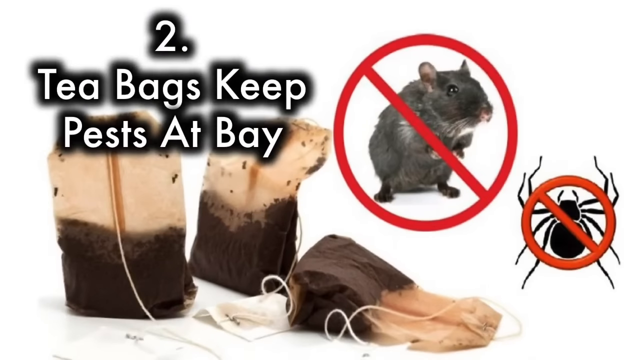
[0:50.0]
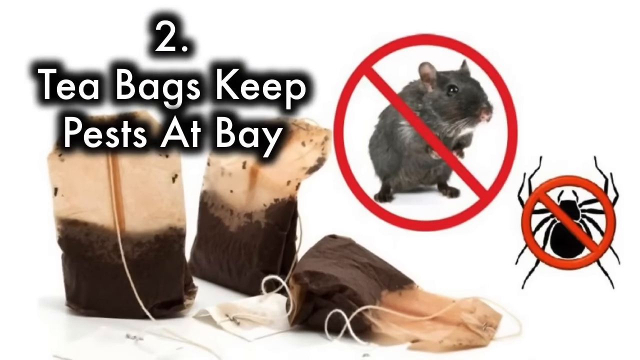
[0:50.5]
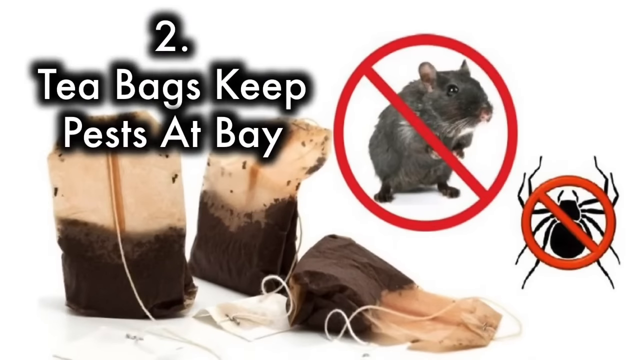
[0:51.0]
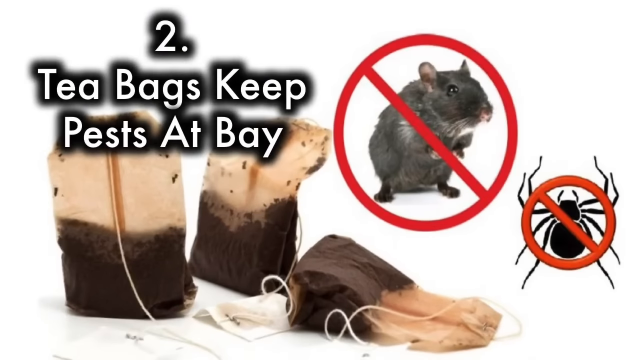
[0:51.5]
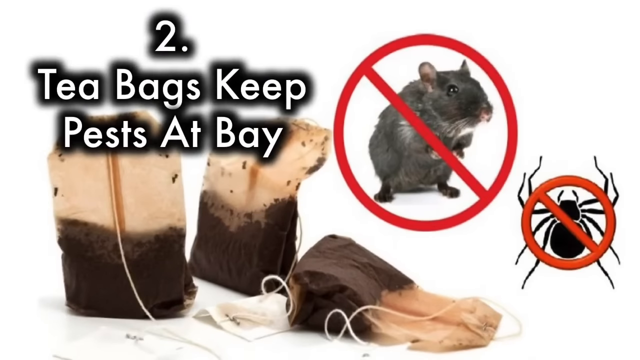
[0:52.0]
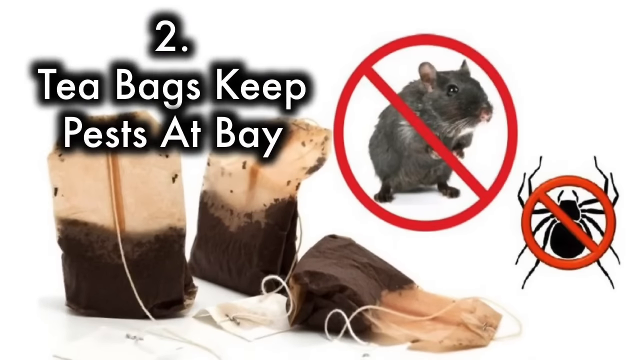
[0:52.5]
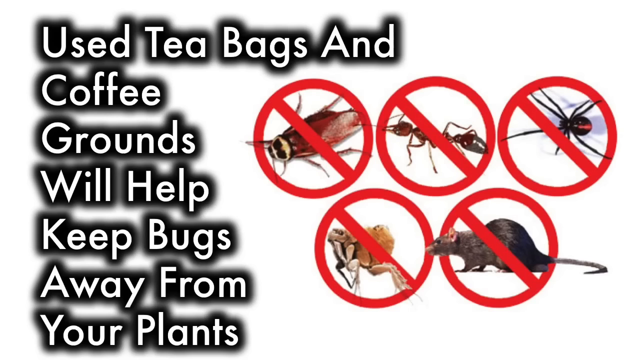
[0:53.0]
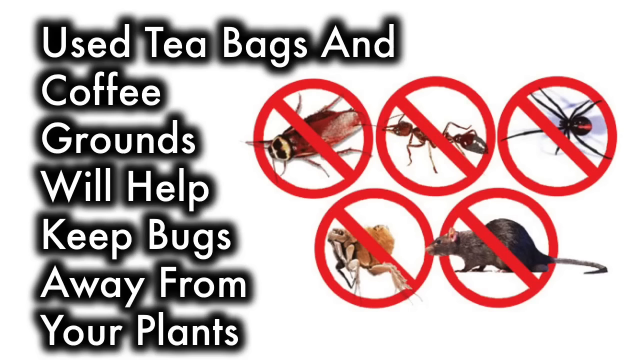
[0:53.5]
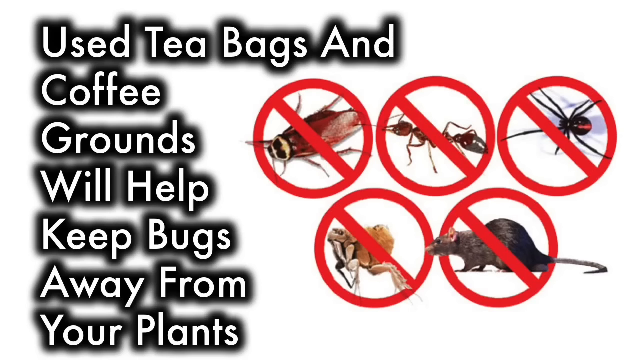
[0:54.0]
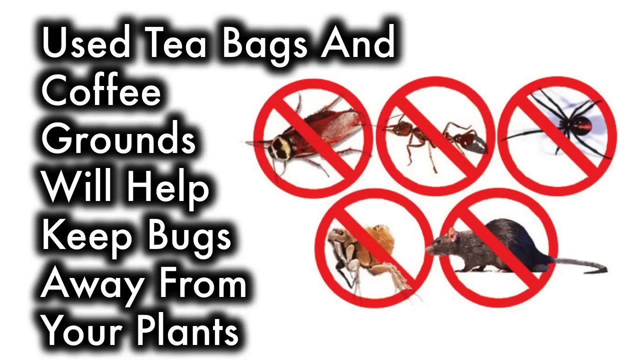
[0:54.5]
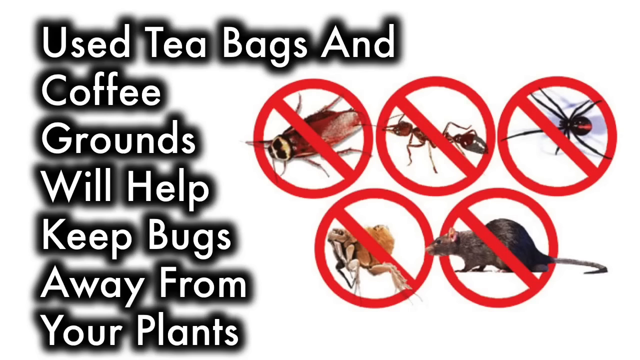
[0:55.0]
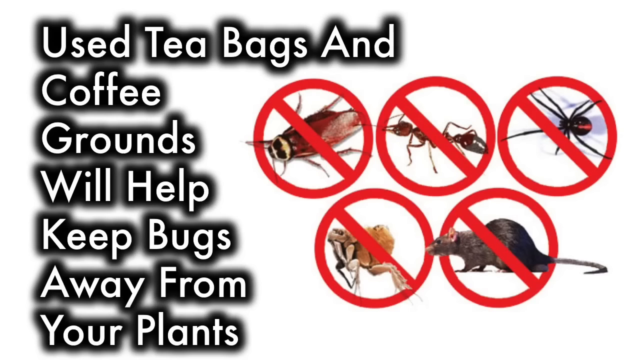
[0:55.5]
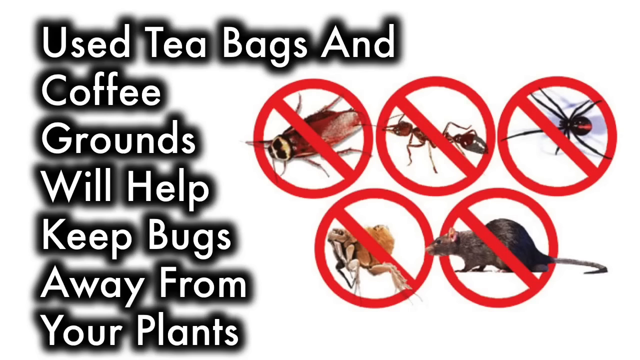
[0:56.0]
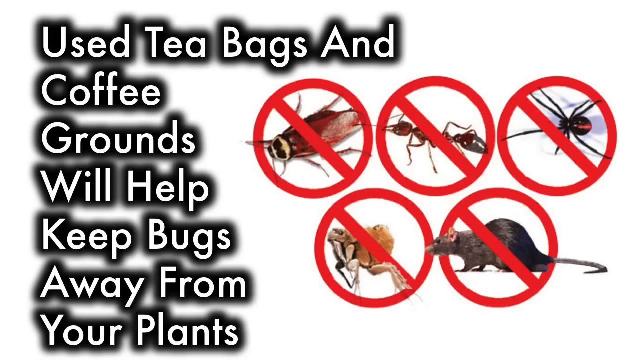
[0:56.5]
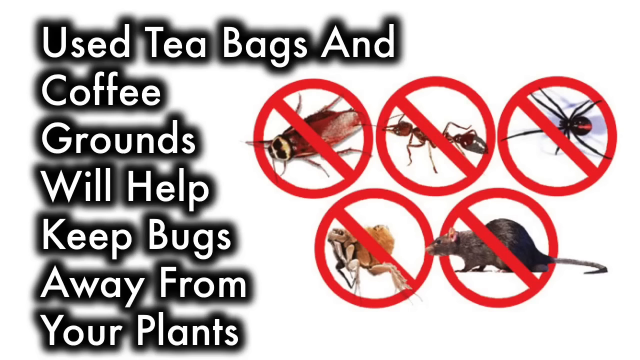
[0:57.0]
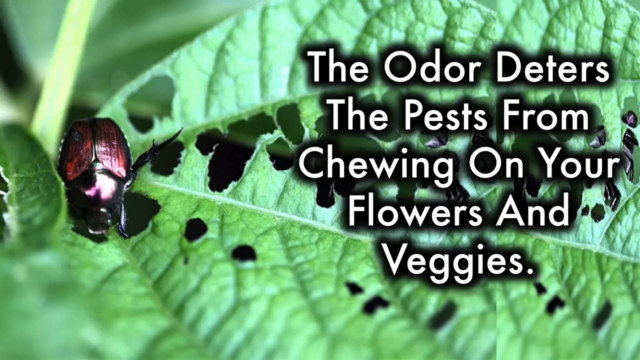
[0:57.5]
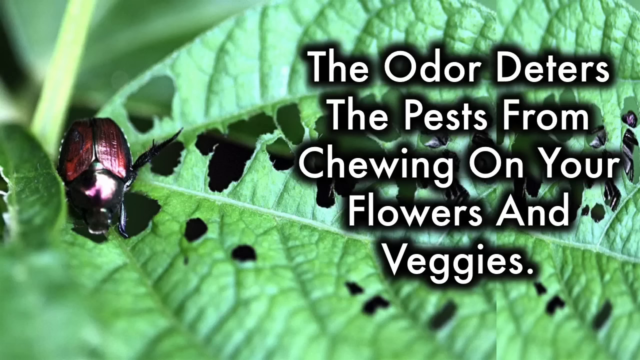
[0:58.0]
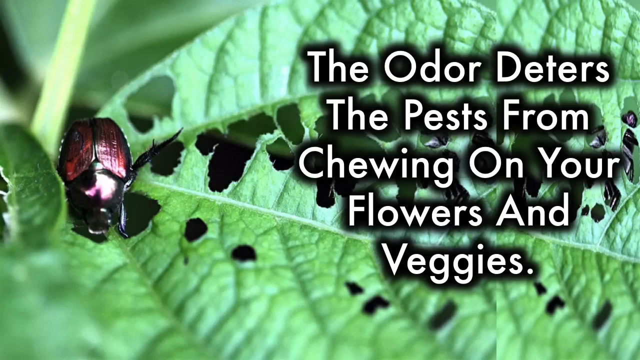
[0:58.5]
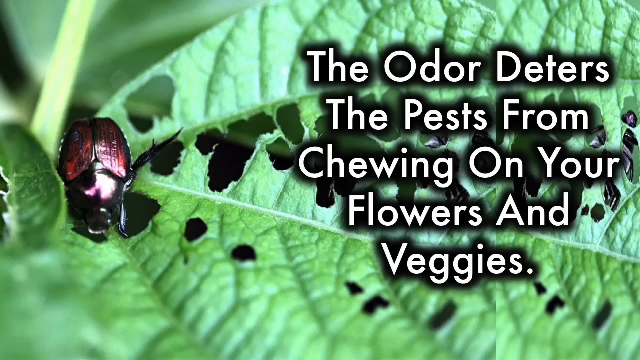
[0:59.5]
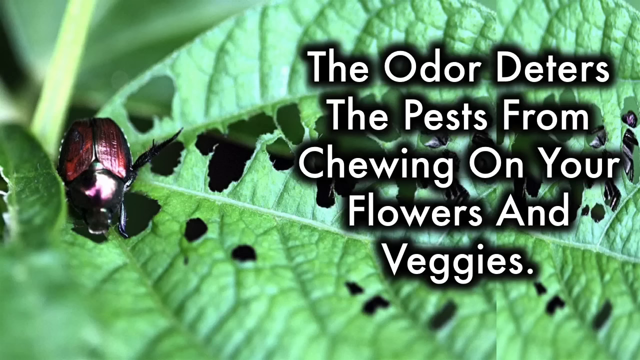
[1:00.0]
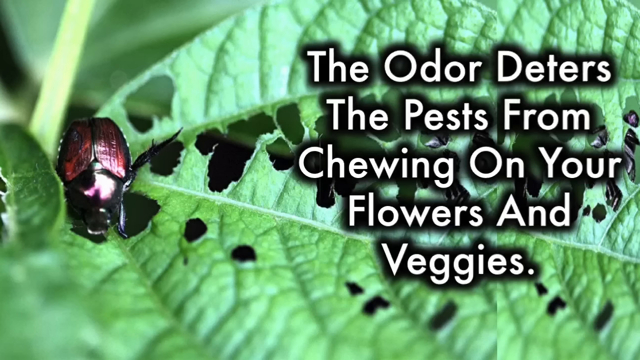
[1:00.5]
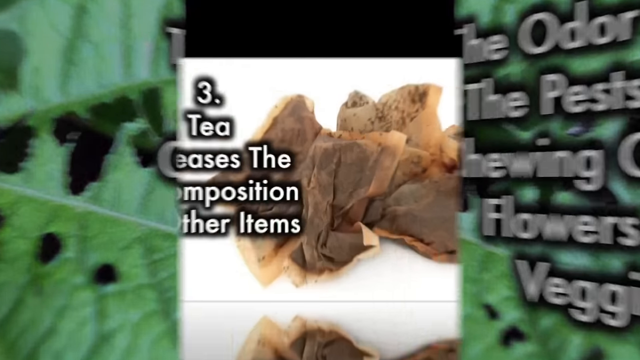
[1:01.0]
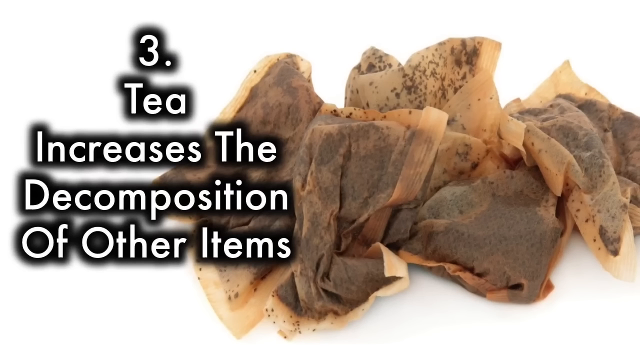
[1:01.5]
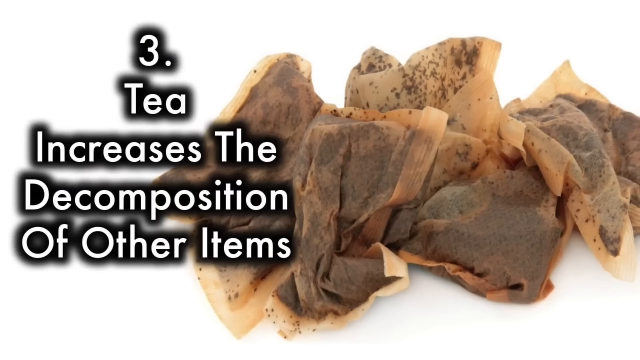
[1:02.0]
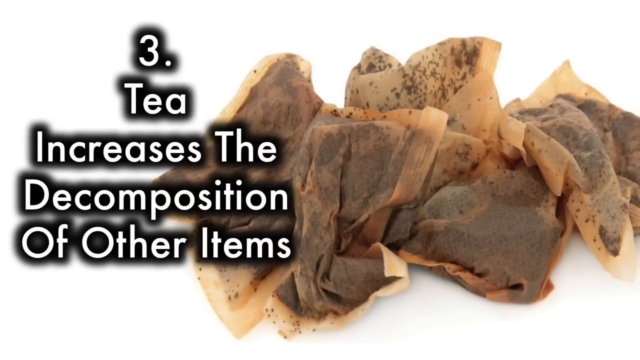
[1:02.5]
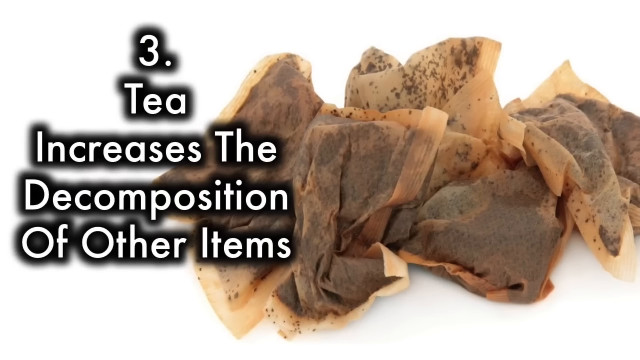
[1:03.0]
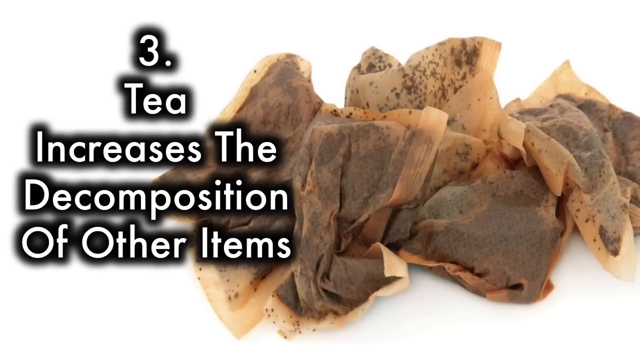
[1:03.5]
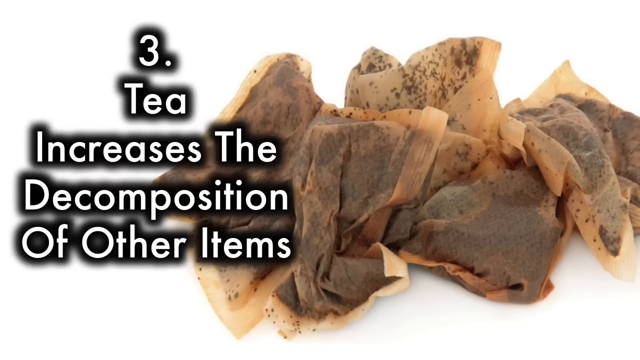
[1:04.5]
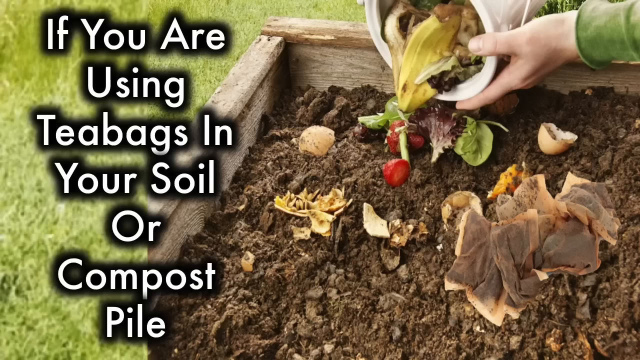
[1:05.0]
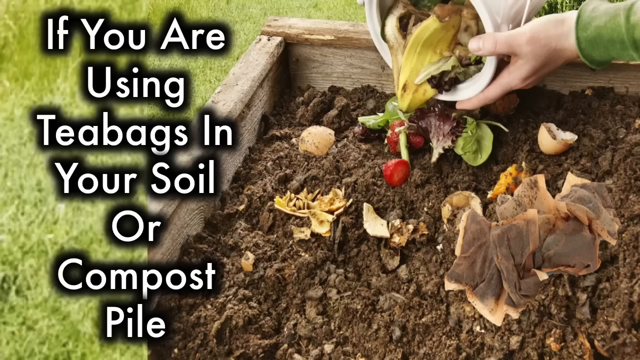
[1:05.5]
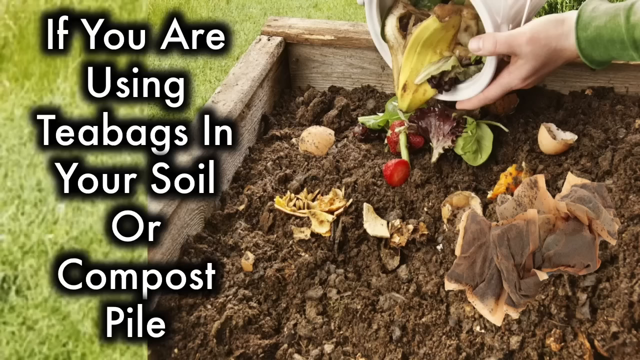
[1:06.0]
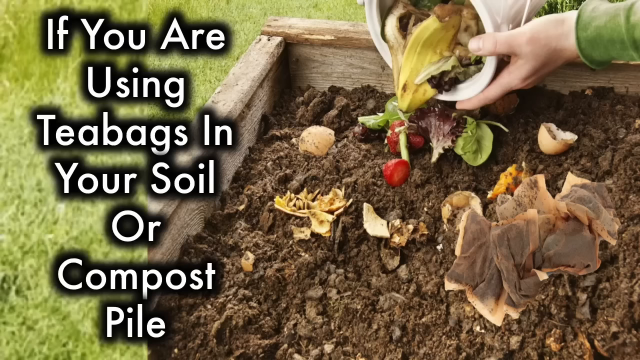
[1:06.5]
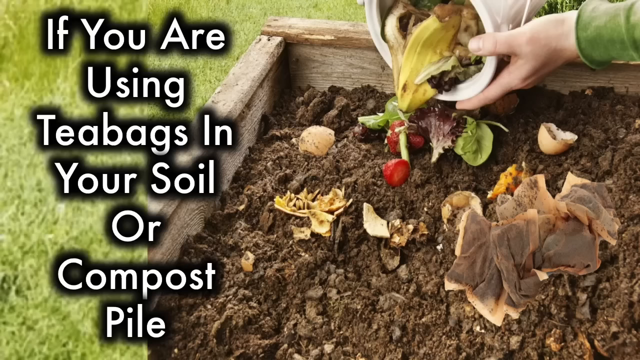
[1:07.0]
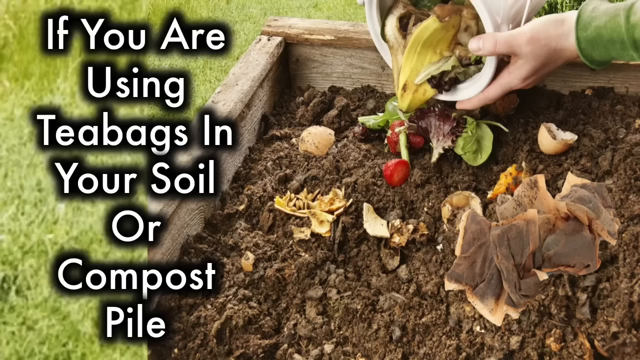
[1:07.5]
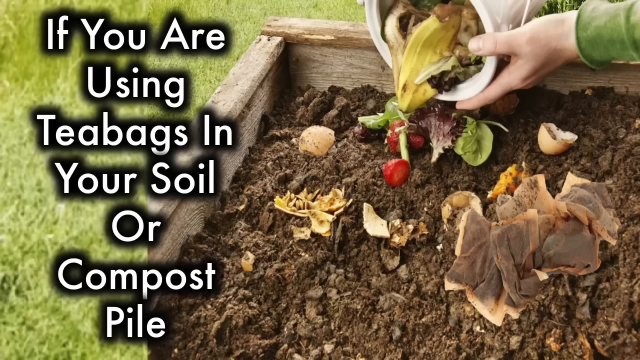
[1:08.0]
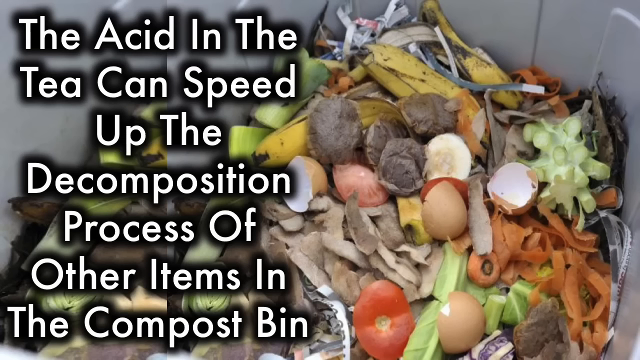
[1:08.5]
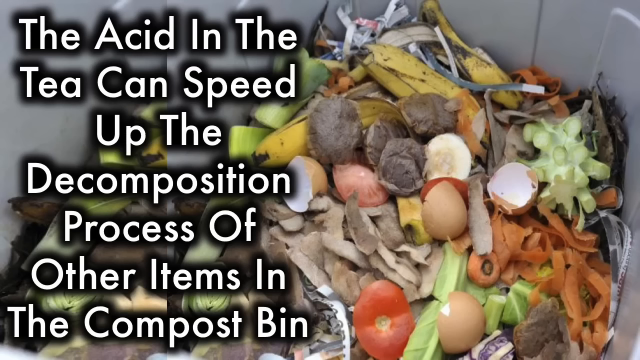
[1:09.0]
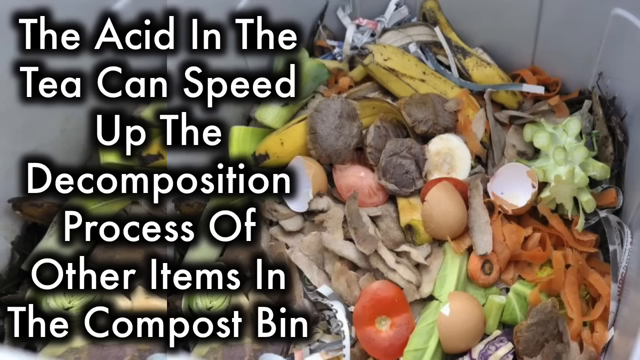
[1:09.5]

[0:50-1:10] The second benefit appears: "Tea bags keeps pests at bay," with the text "Use tea bags and coffee grounds will help keep bugs away from your plants." A cockroach, ants and rats are shown as animals that can destroy plants. Further text mentions deterring pests from chewing on flowers and veggies. Another point follows, about tea and the decomposition of other items, with the text "If you are using tea bags in your soil or compost pile, the acid in the tea can speed up the decomposition process of other items in the compost bin."